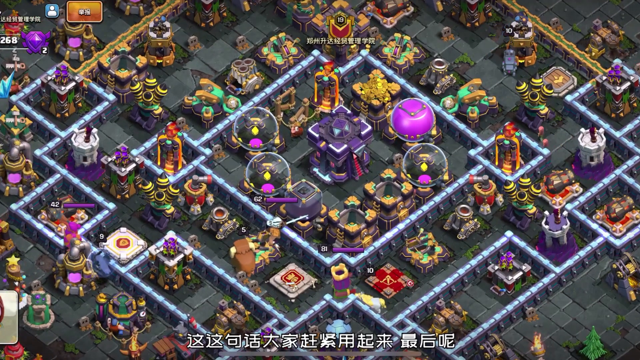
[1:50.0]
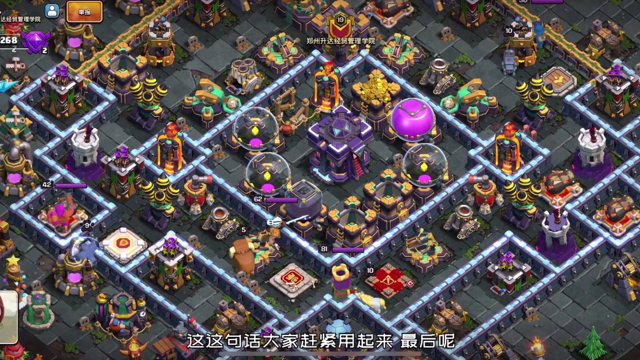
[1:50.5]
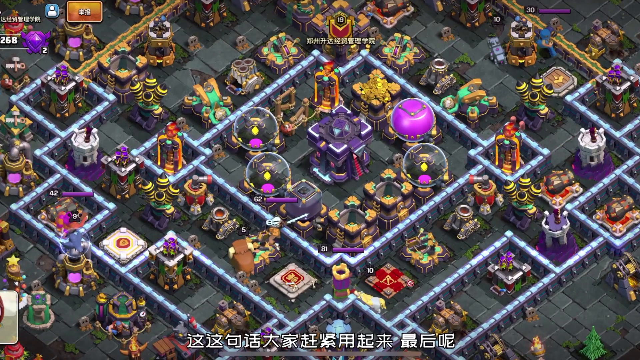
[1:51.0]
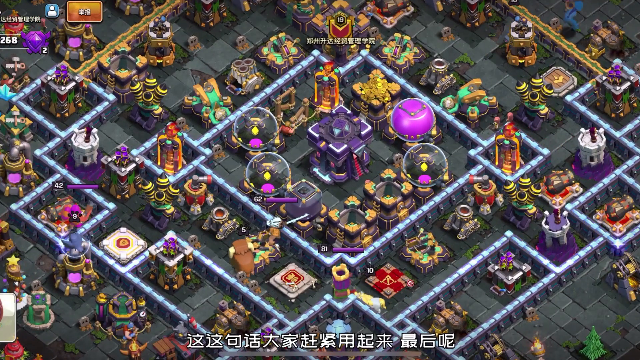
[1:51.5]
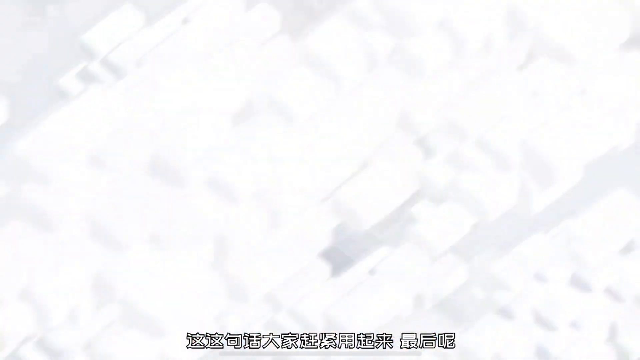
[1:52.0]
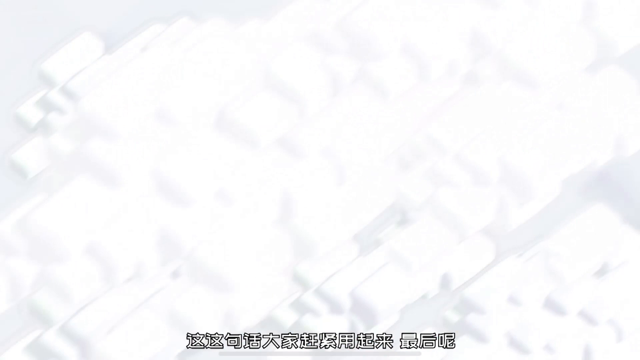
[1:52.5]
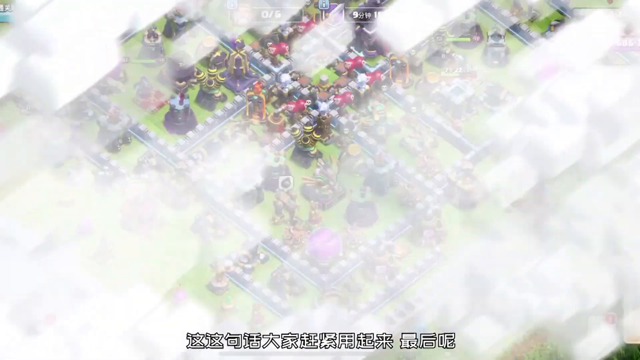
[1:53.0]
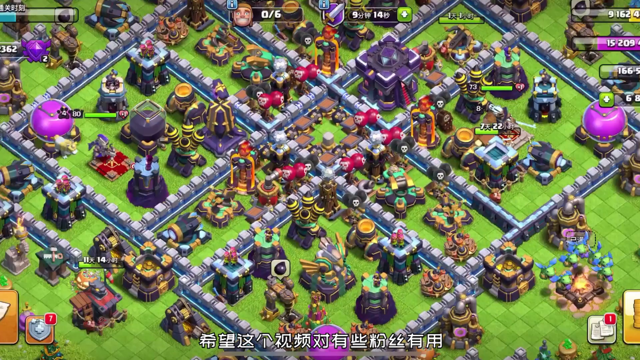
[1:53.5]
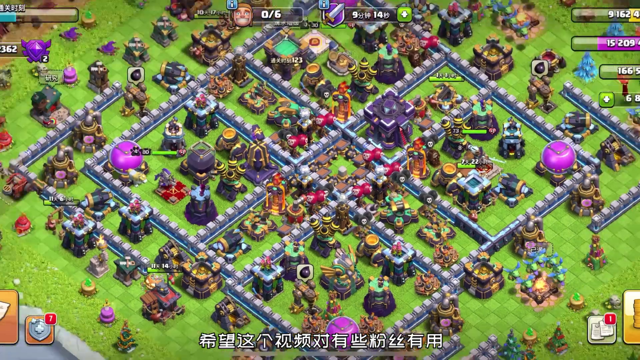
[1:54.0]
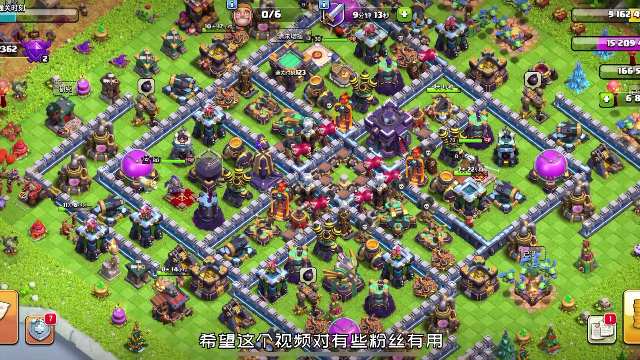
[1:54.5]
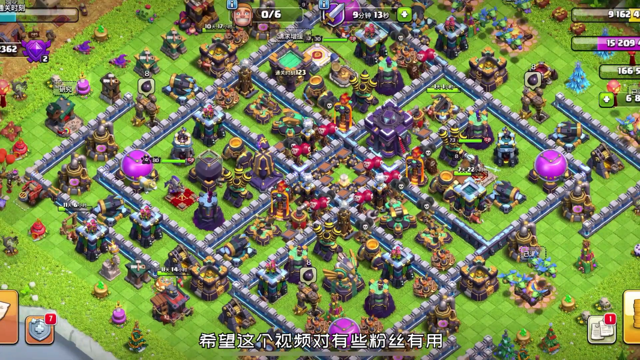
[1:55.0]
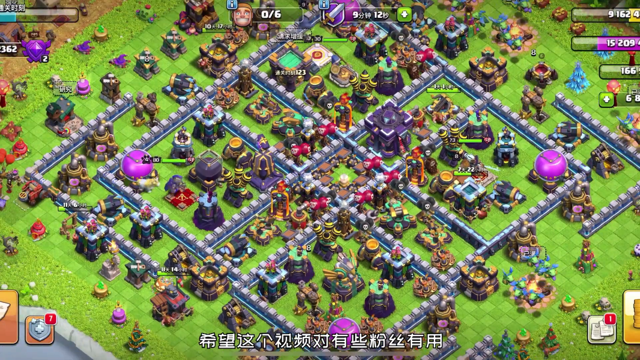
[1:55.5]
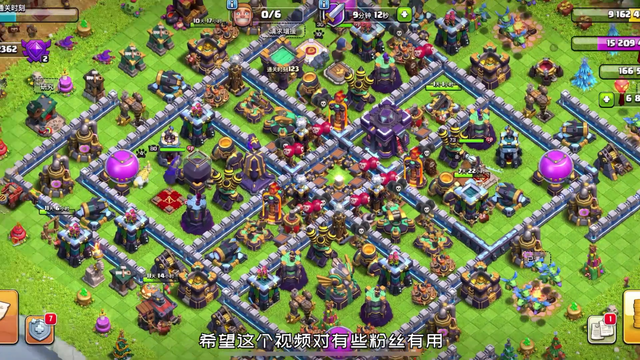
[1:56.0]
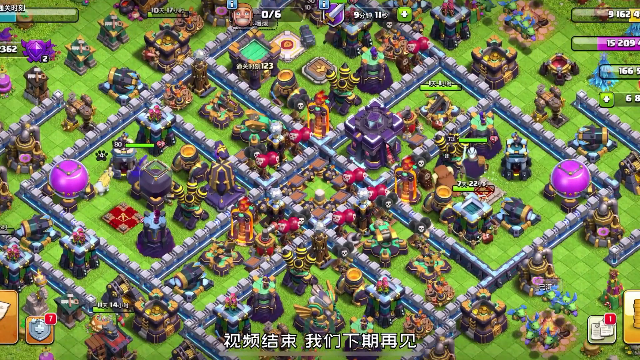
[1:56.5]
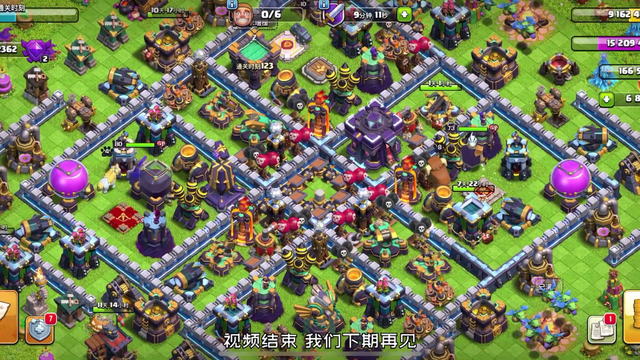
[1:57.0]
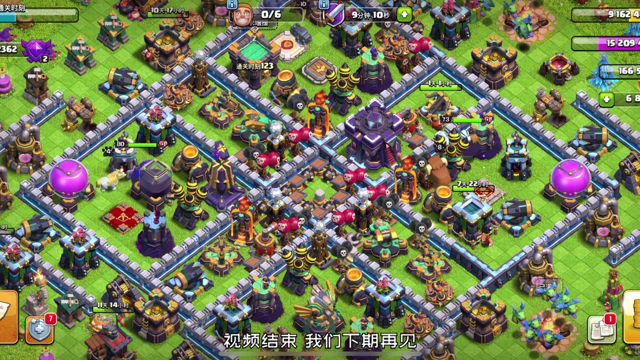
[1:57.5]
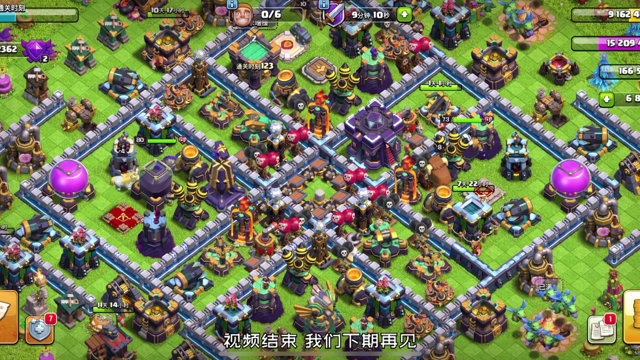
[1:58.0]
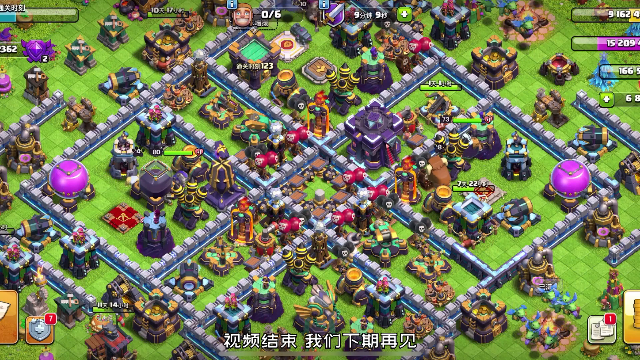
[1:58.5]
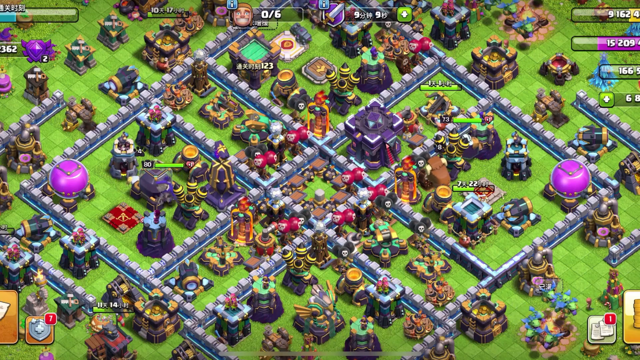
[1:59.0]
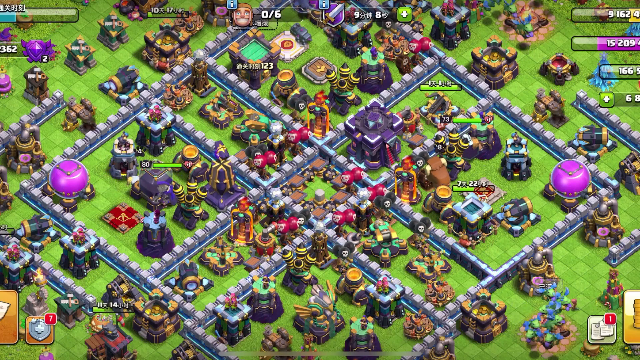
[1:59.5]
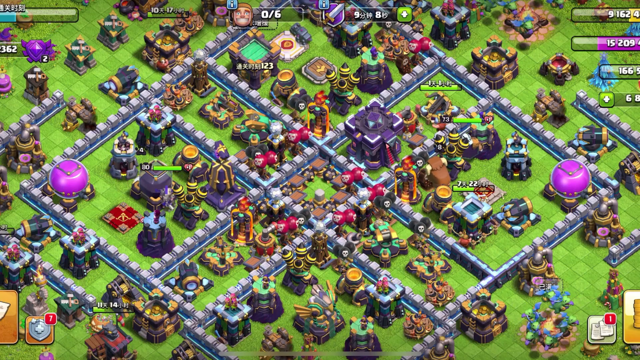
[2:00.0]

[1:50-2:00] A white background with a cloud-like texture in white and light gray appears again and splits open from the right and left to reveal an aerial view of what seems to be a video game simulation. There is a square in the middle made of four different squares, one at each corner, and kind of a cross in the middle. Each of these squares is populated with different items, and more objects are around the larger square. The objects range from purple kind of globes to black and gray objects and figures, as well as different kinds of containers, levers, what seem to be construction items, and huts. The colors vary, but most are gray, brown, purple and green.